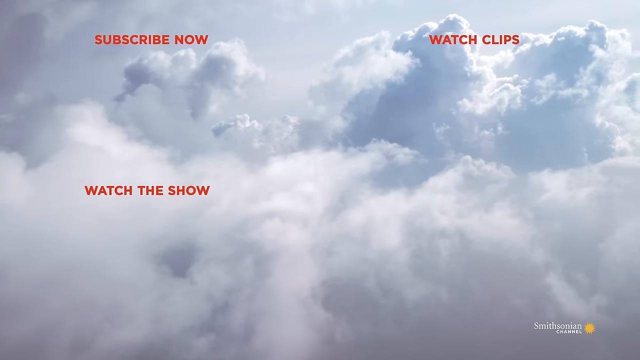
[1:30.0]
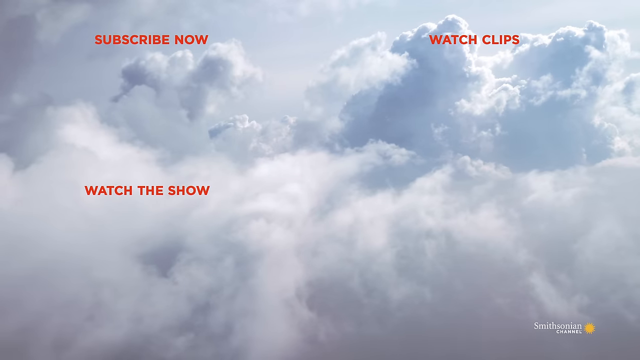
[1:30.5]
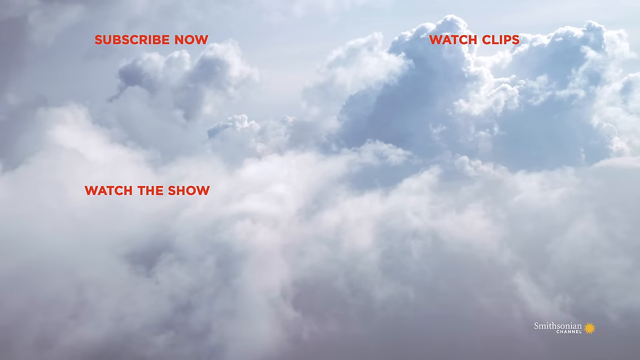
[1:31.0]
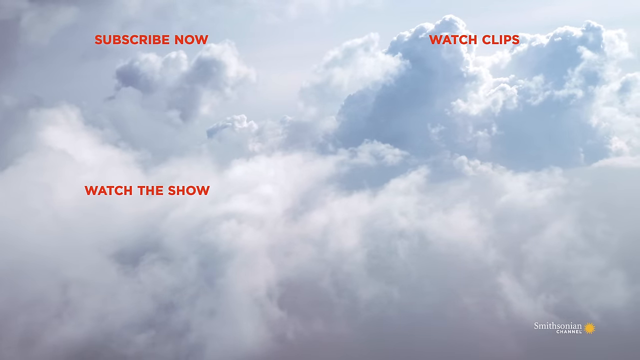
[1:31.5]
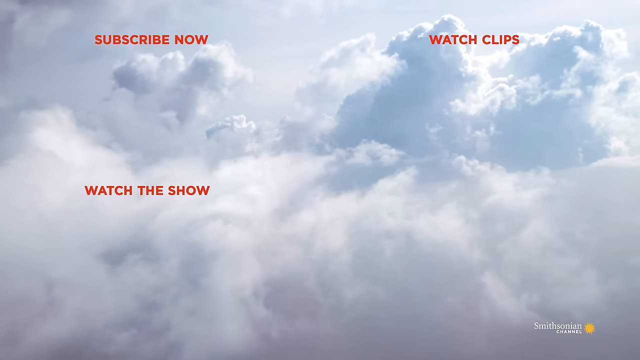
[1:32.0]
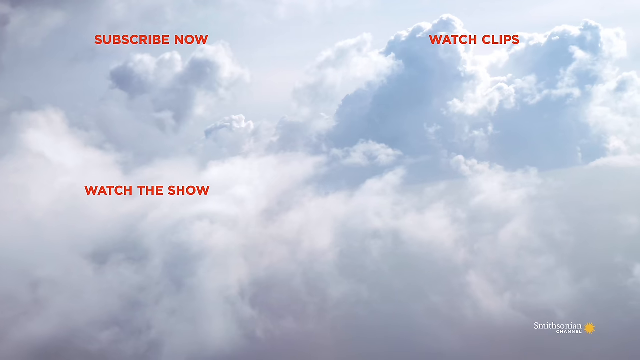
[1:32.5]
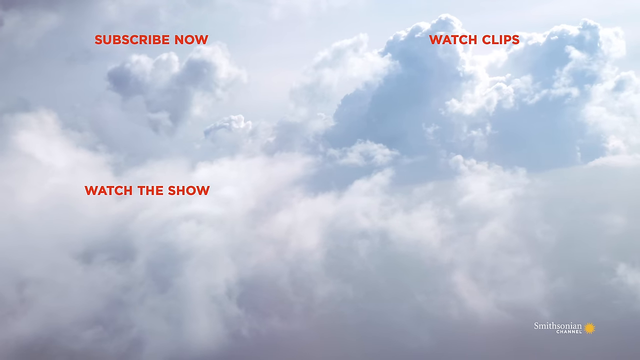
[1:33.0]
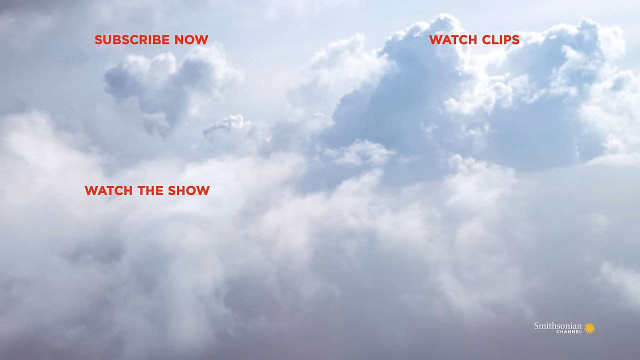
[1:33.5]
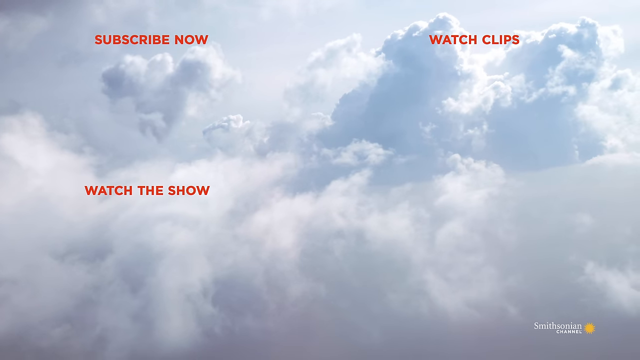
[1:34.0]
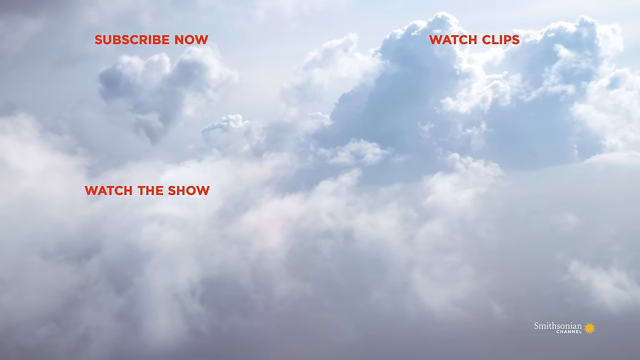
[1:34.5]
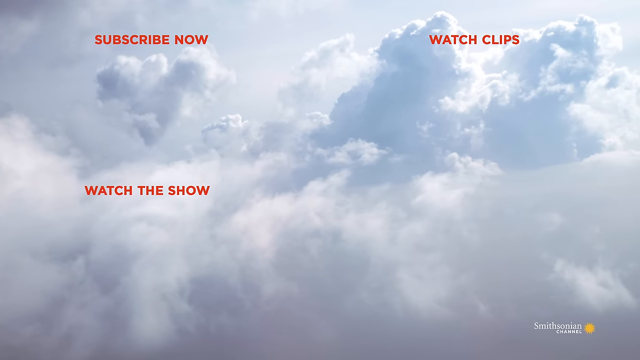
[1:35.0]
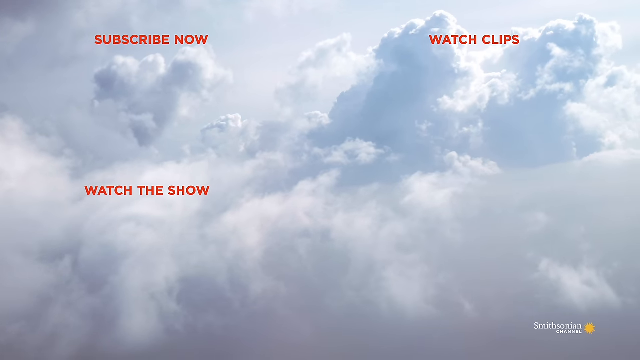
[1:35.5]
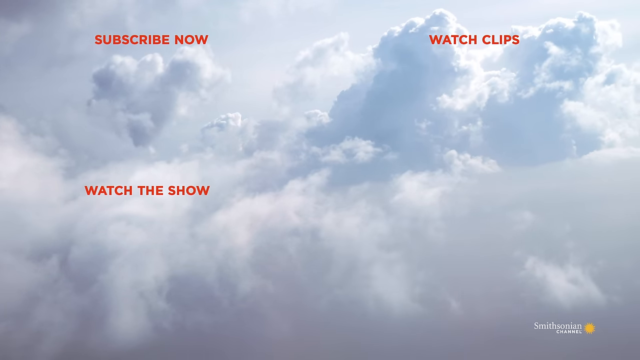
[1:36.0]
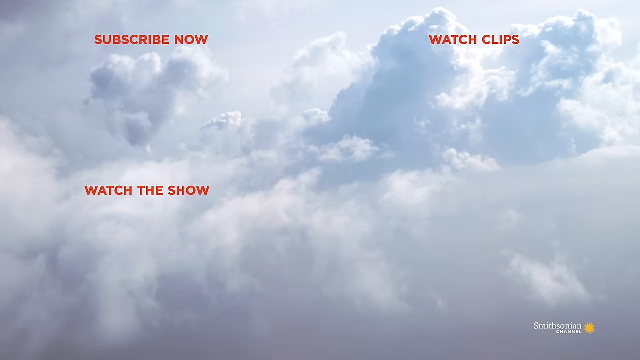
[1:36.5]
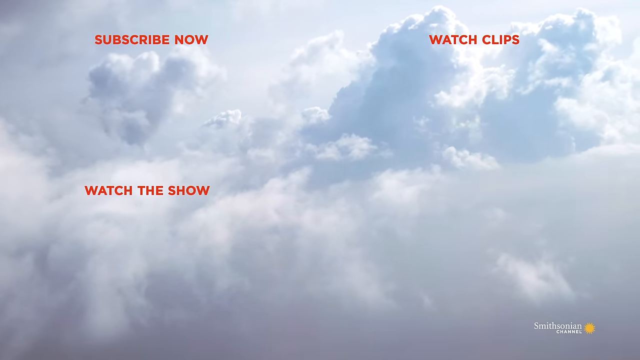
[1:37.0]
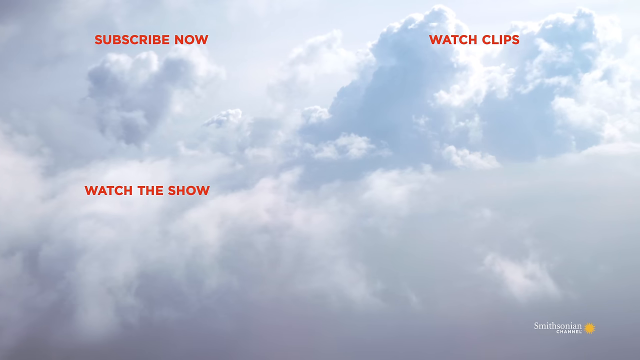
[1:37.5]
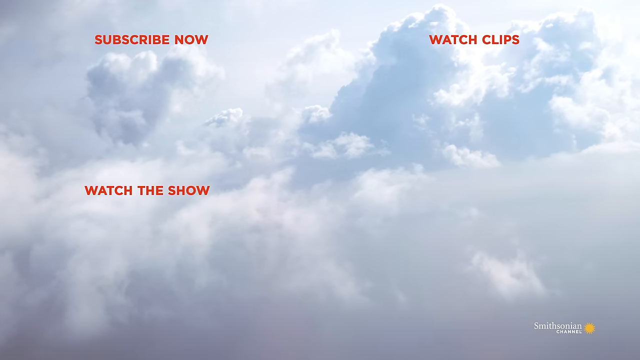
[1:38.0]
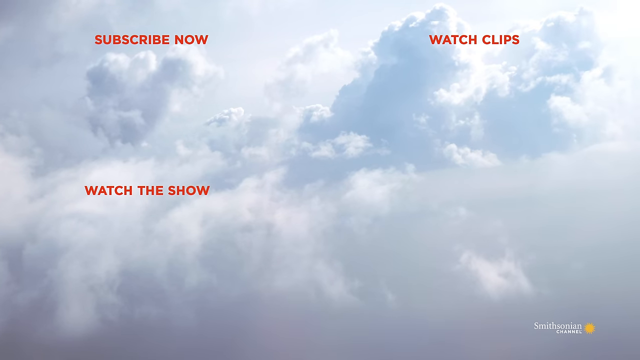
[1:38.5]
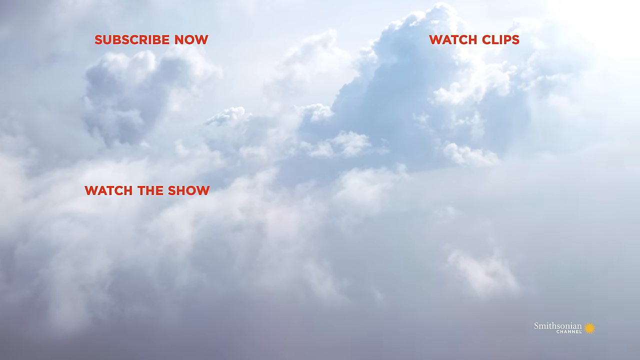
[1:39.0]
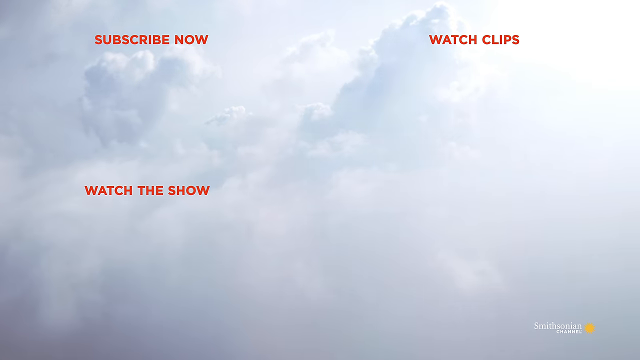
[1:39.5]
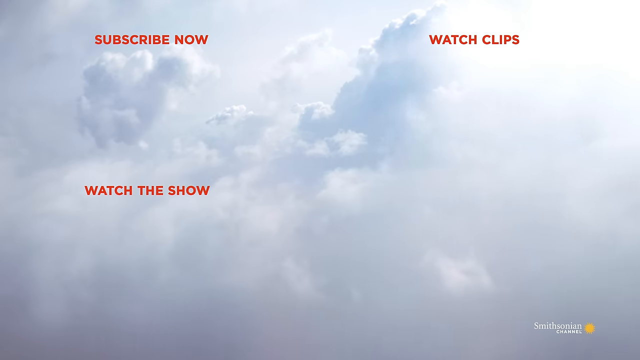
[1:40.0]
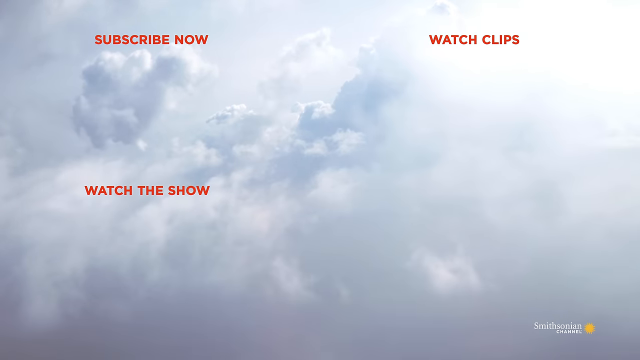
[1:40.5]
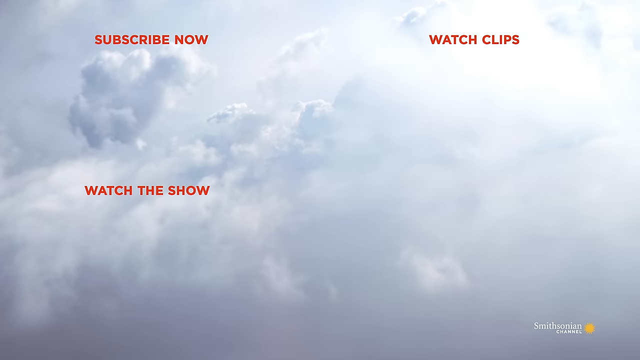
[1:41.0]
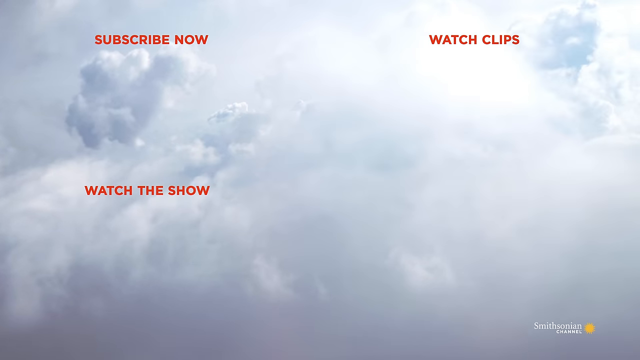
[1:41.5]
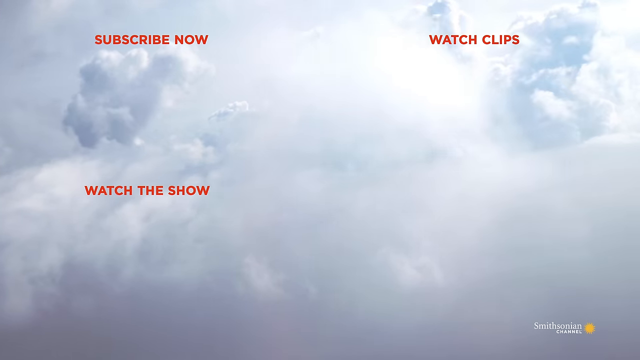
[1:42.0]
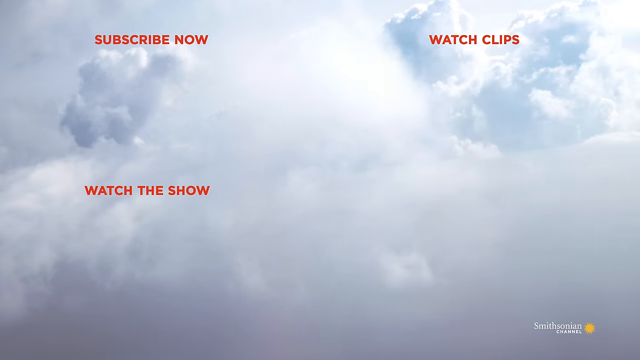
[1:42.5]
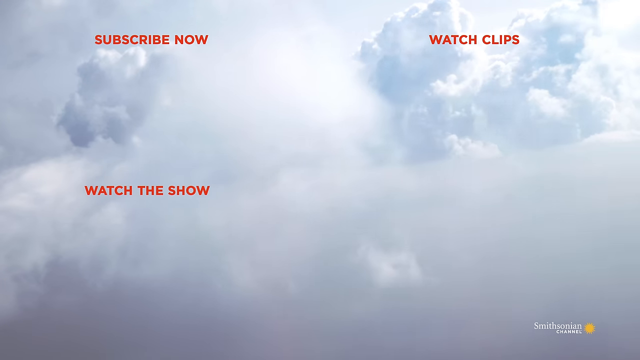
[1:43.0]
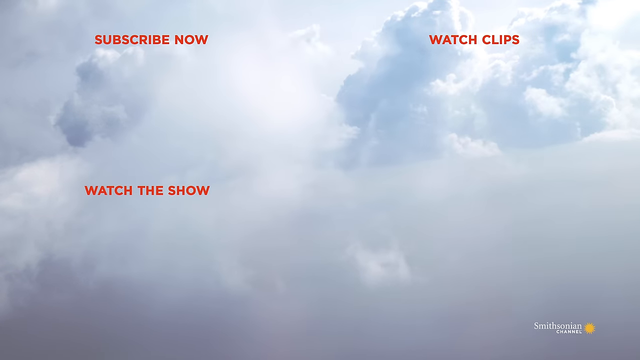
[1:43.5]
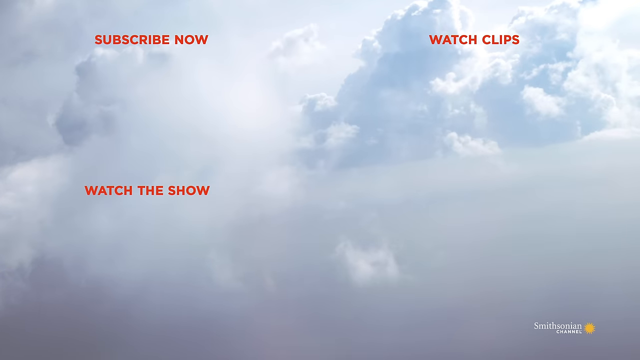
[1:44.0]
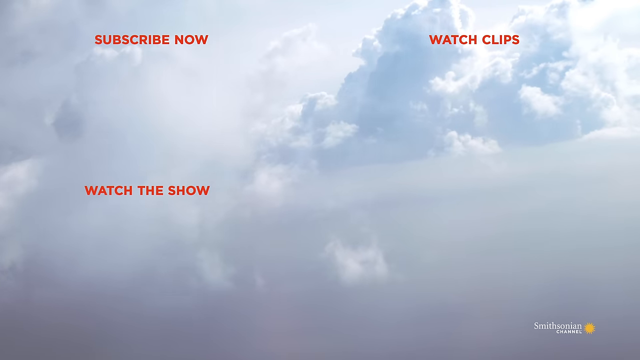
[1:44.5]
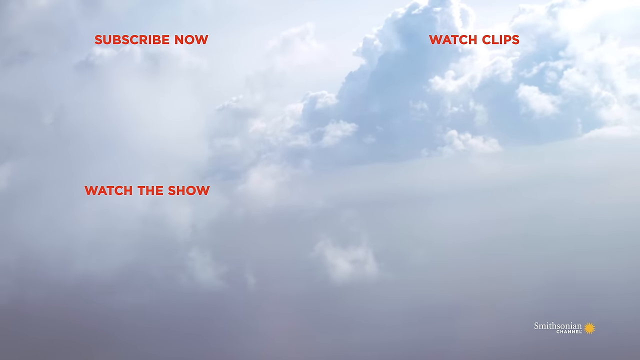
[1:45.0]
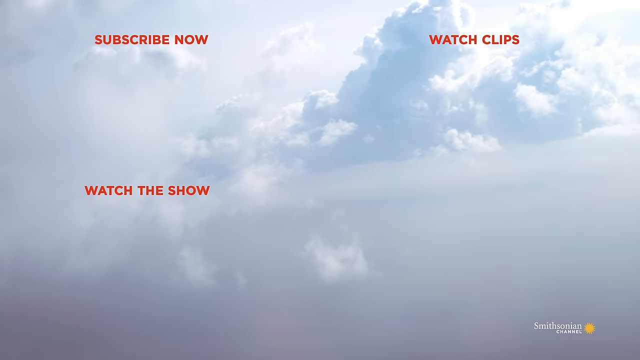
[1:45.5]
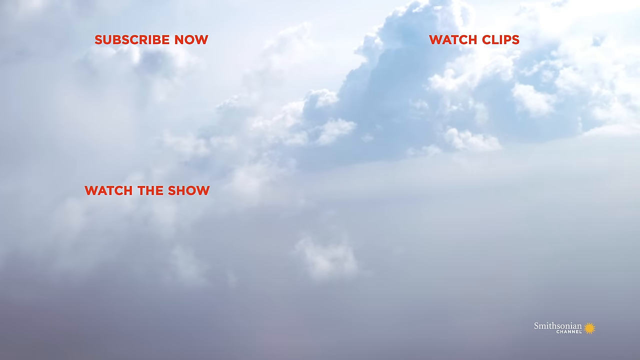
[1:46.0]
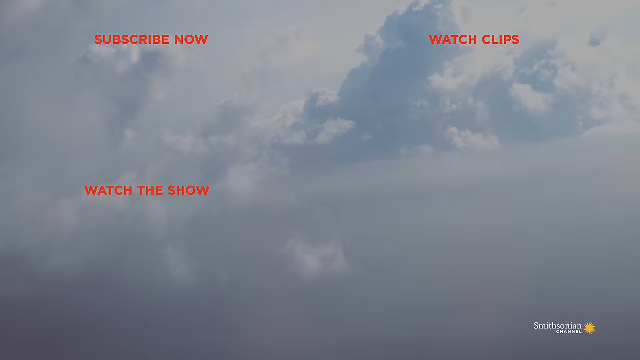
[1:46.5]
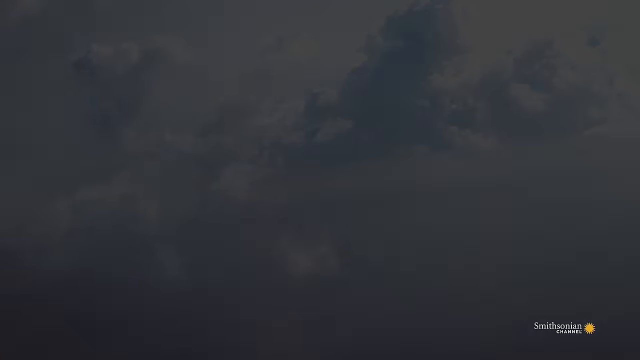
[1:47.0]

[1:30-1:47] Red text reading "subscribe now", "watch clips" and "watch the show" appears against a sky background with clouds: big heavy clouds, with light misty ones coming in front of them. "Smithsonian" is written on the screen. The clouds pass through: very light white clouds connected to a darker blue-gray cloud, and other clouds almost like a mist passing across.